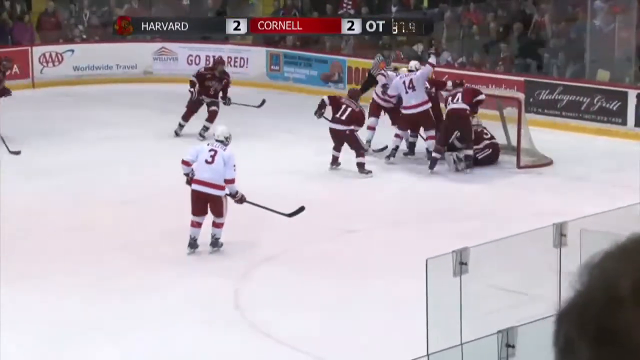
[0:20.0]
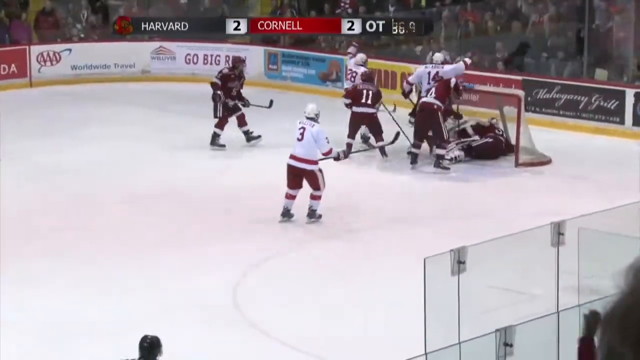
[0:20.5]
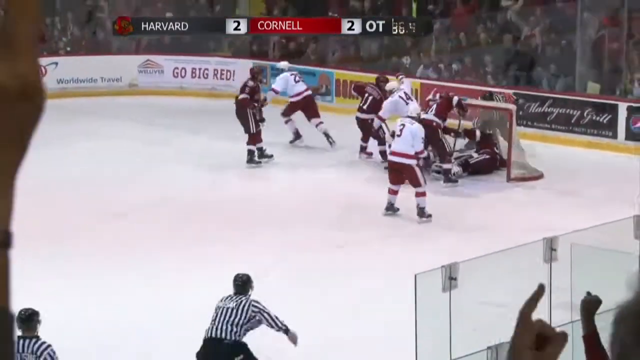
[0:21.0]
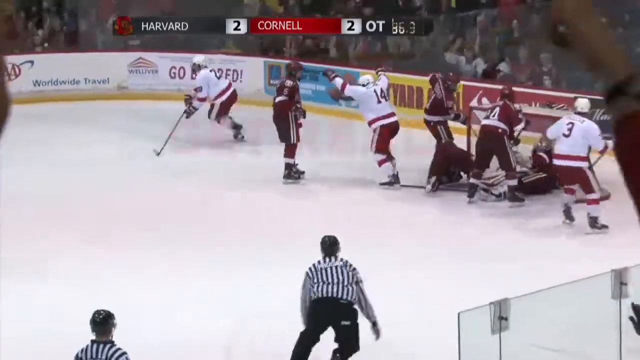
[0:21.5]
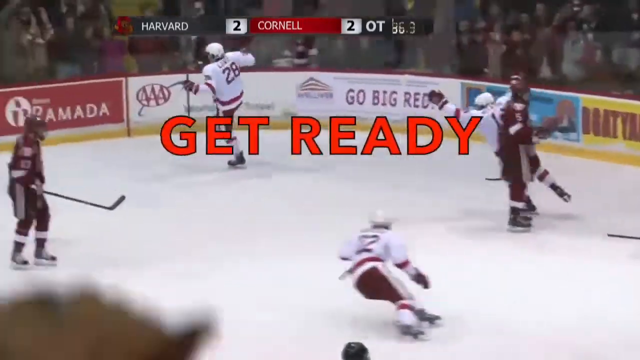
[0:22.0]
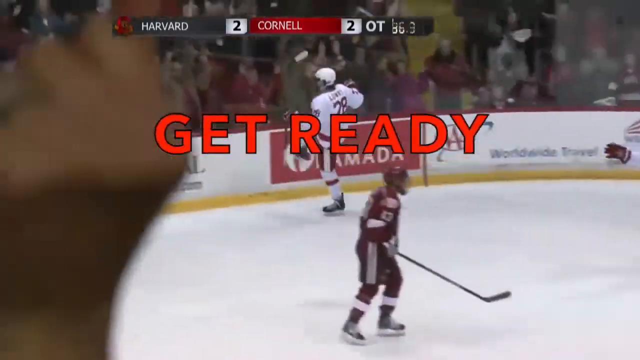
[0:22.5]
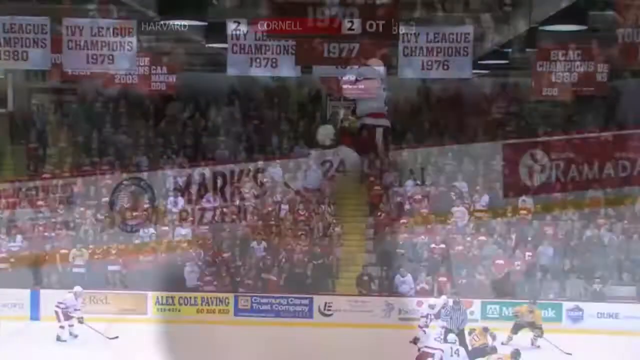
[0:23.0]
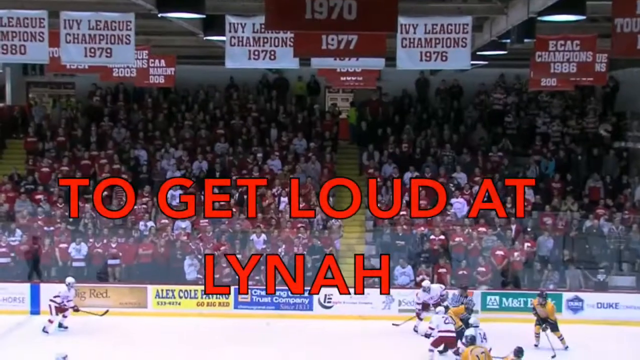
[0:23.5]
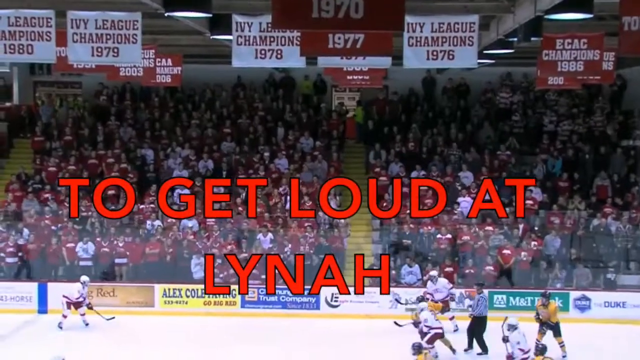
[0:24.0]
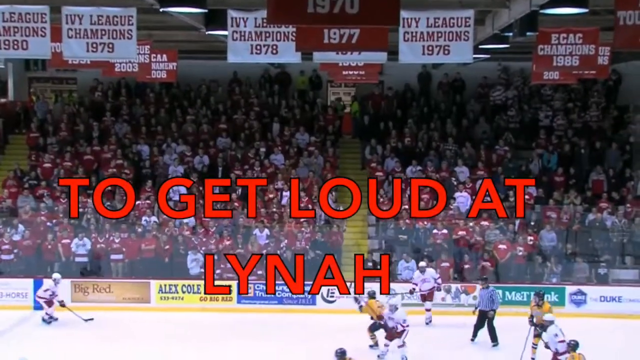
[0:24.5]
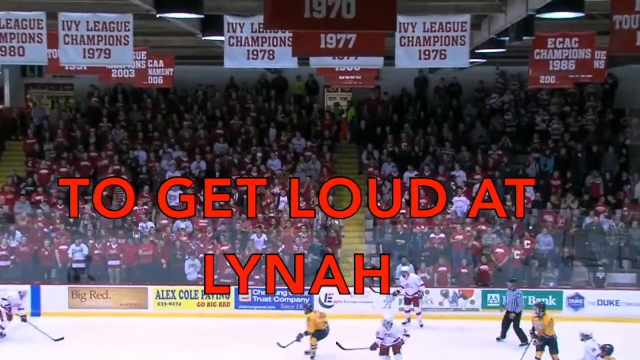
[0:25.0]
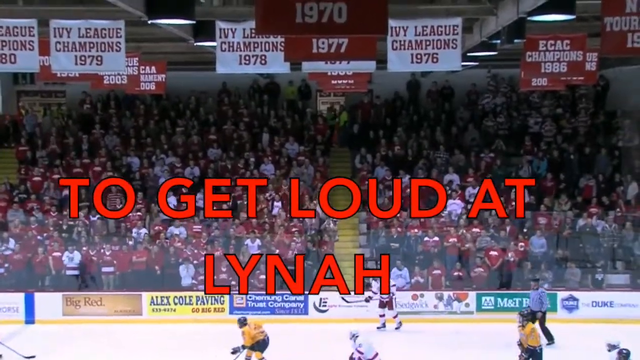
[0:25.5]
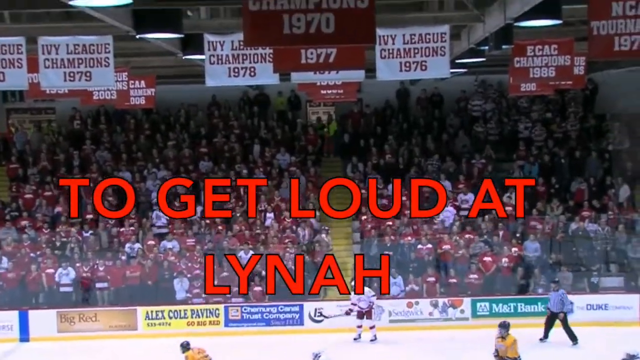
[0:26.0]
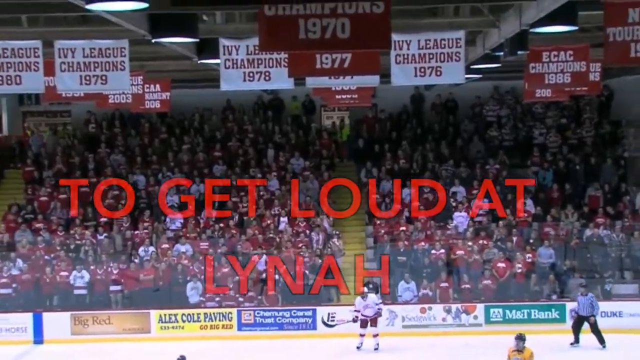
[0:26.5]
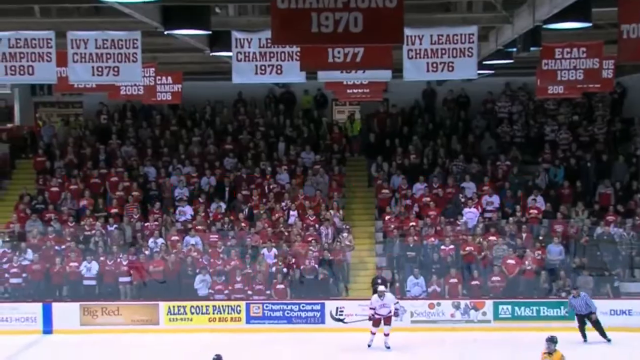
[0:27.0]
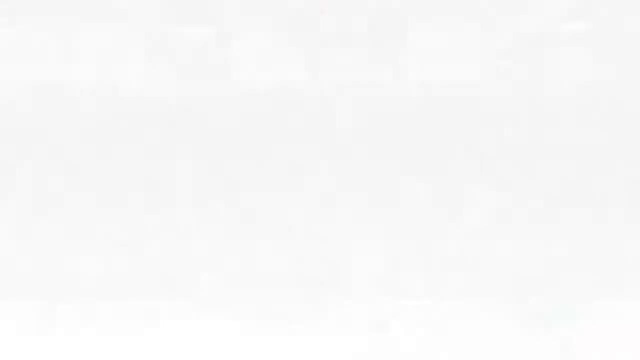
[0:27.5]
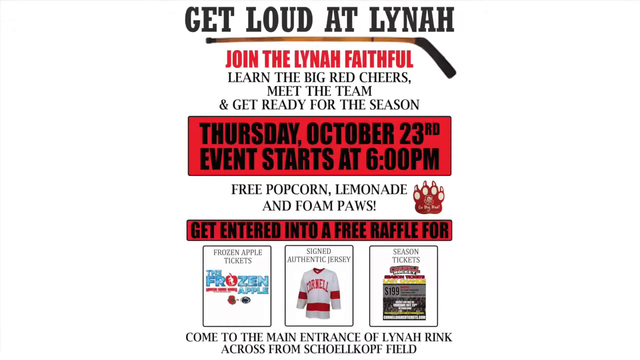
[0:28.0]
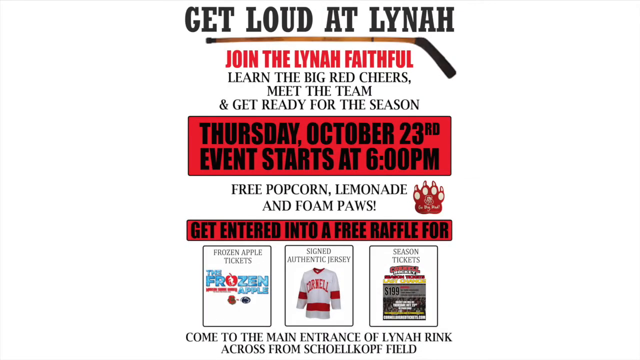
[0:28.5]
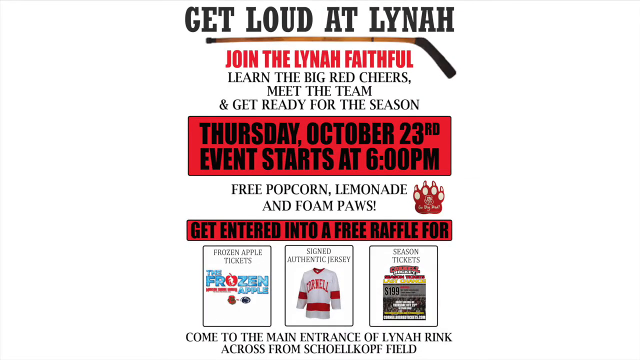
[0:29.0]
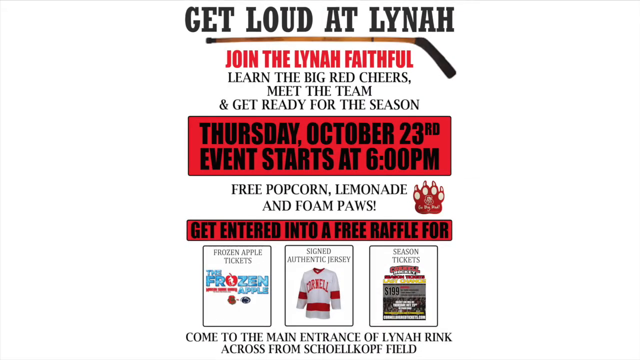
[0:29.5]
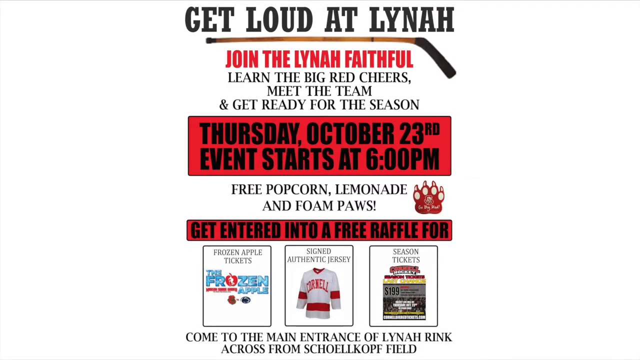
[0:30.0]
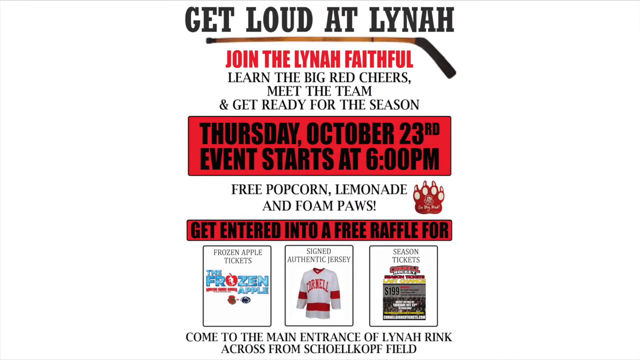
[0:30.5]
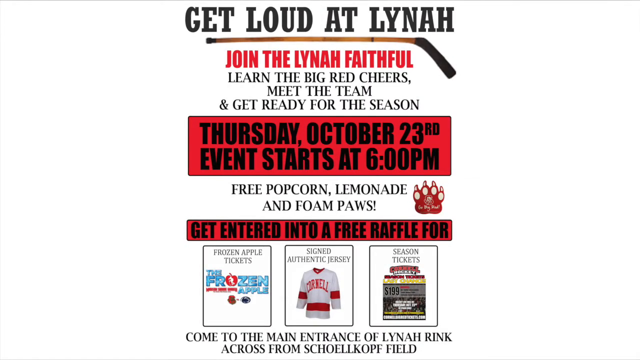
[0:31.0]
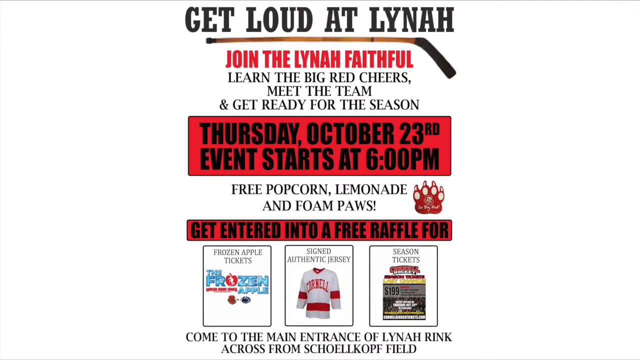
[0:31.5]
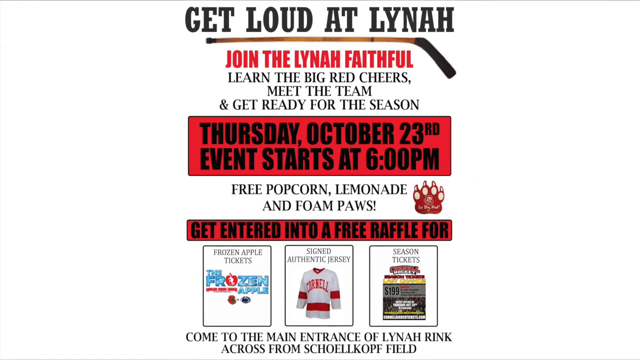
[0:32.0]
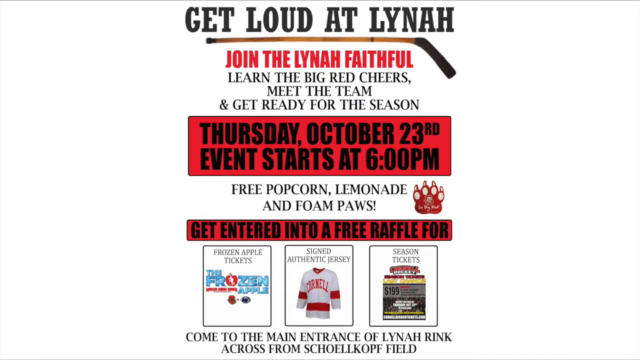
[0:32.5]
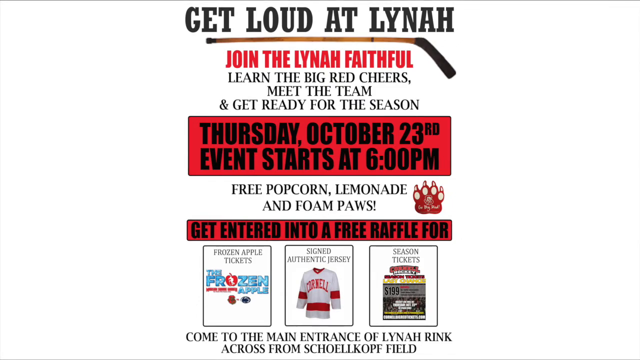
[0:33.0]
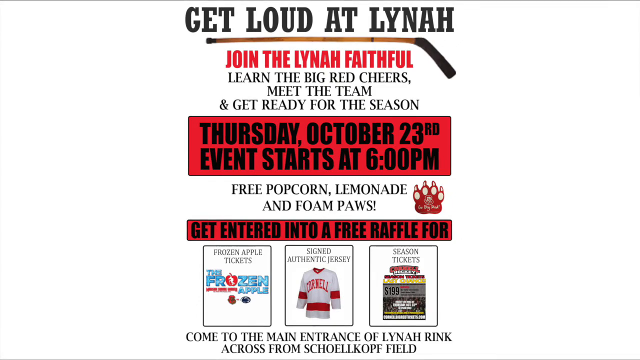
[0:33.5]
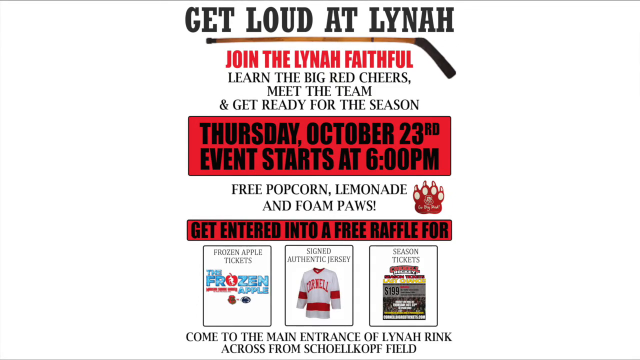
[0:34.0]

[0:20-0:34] Players are playing hockey. Text reads "get ready," followed by a list of Cornell Ivy League championships, including 1979 and 1970. The video pauses on a text screen with black writing on a white background that reads "get loud at Linna," "Join the Linna Faithful," "learn the Big Red Cheers," "meet the team and get ready for the season," "Thursday October 23rd," "event starts at 6 p.m.," "free popcorn lemonade and foam paws," and "get entered into a free raffle." It also mentions season tickets and says "come to the main entrance of Linna." The video stays focused on this text for a while.